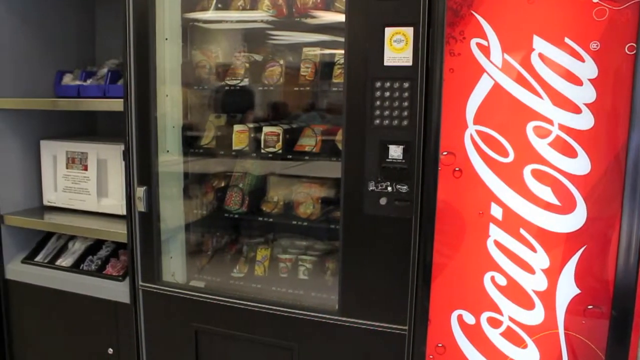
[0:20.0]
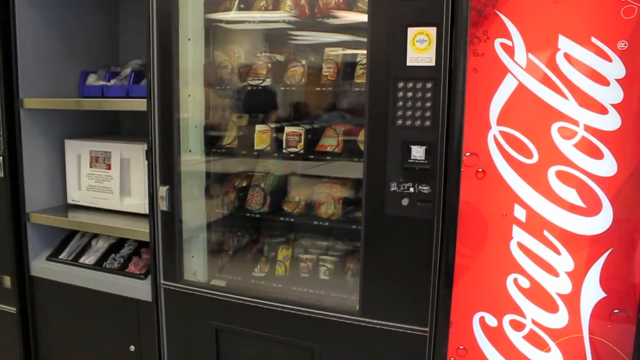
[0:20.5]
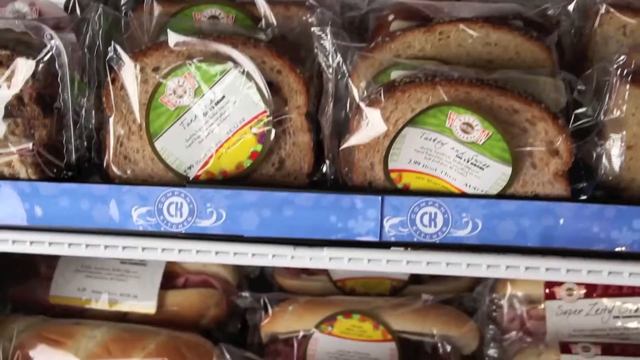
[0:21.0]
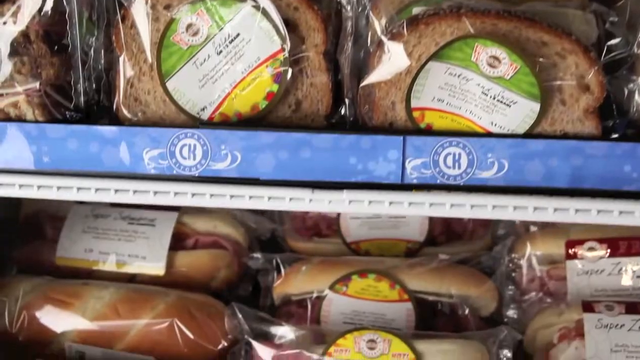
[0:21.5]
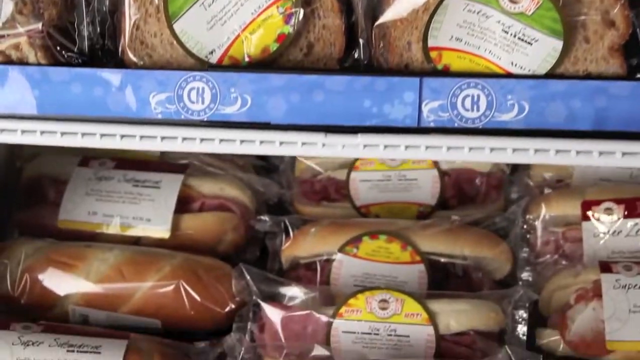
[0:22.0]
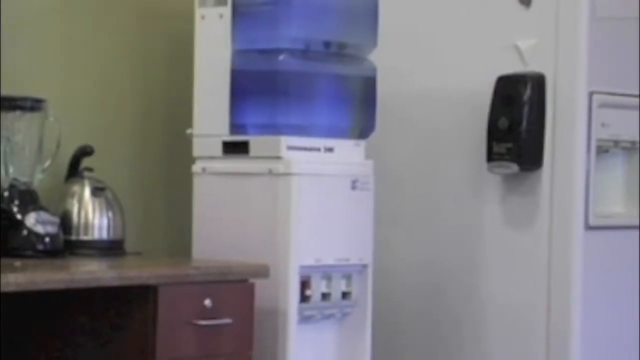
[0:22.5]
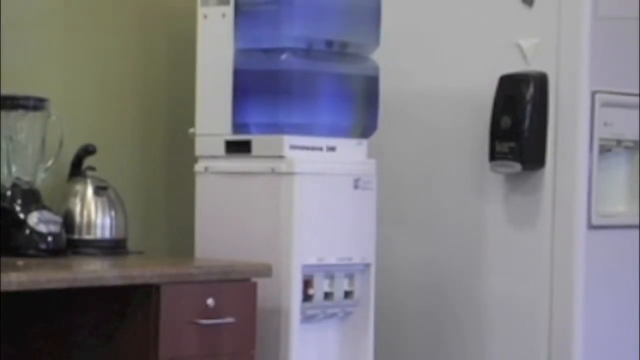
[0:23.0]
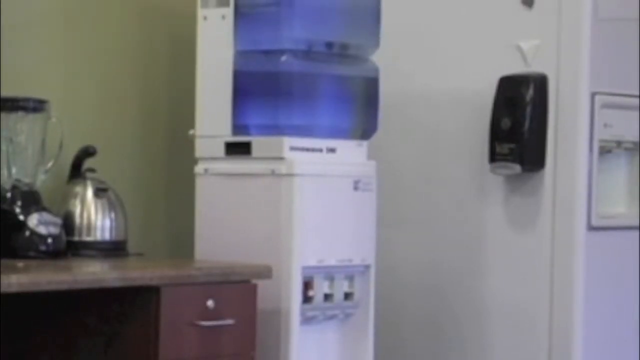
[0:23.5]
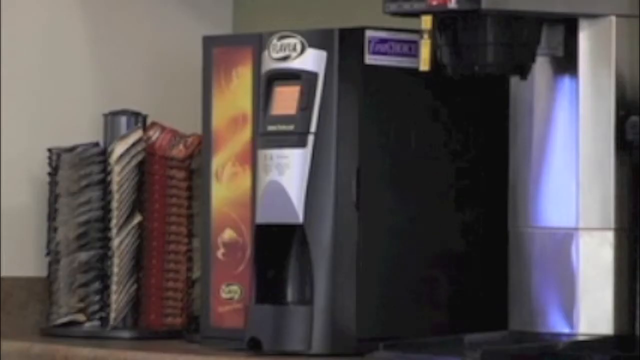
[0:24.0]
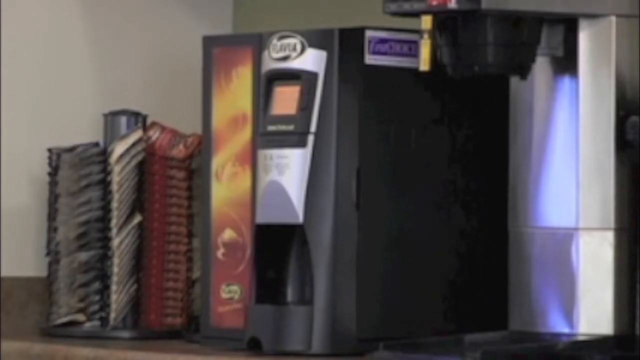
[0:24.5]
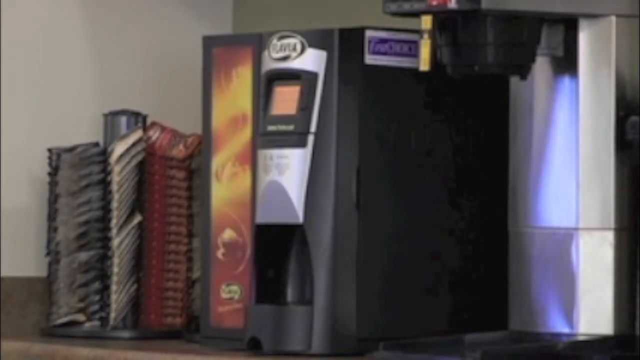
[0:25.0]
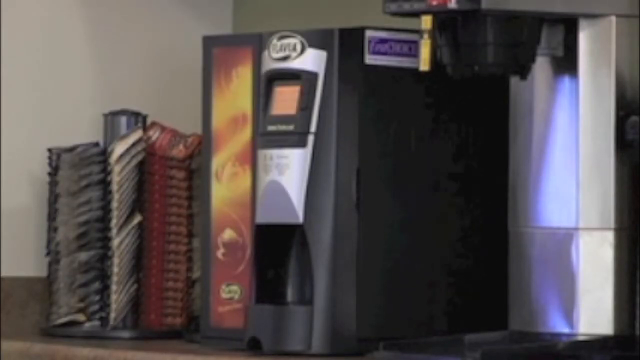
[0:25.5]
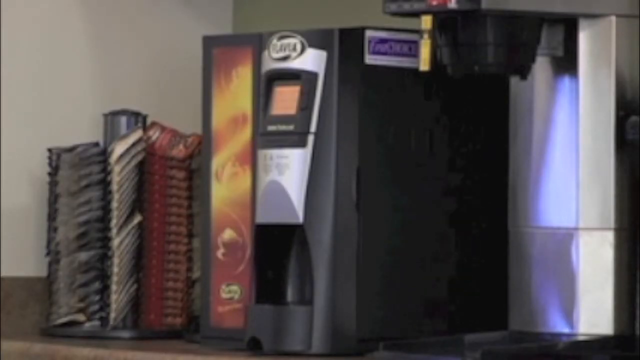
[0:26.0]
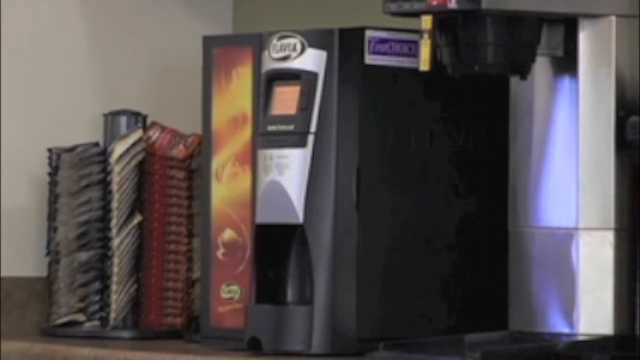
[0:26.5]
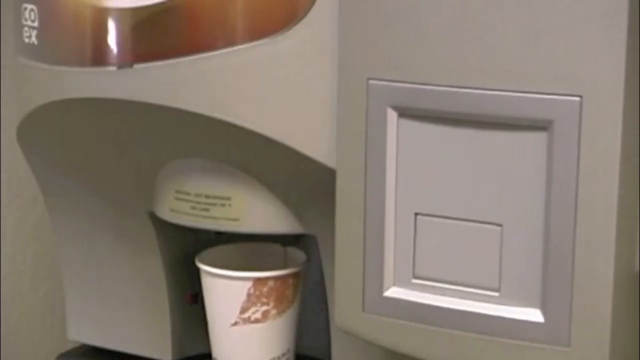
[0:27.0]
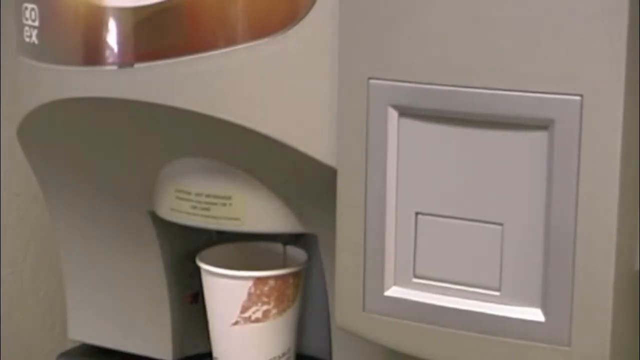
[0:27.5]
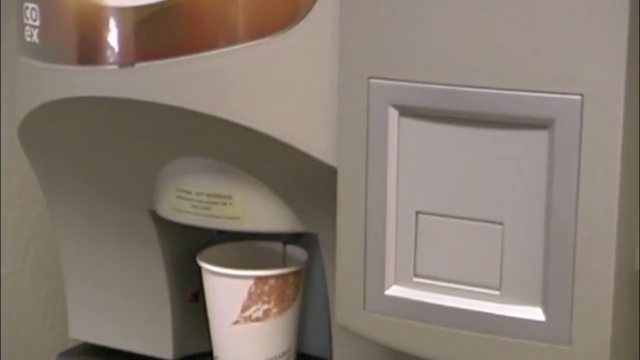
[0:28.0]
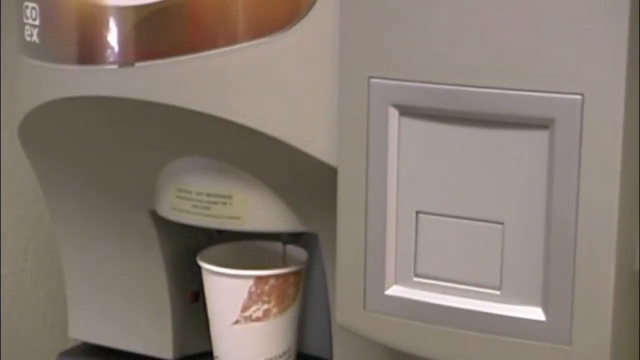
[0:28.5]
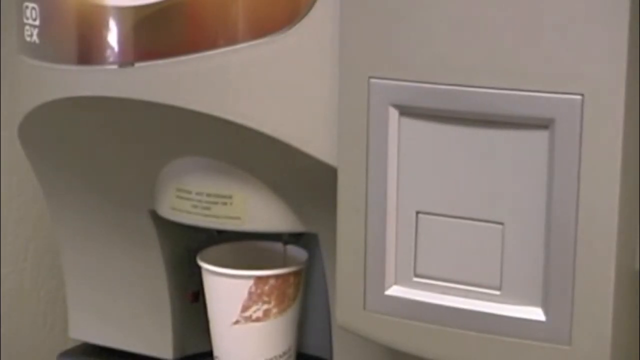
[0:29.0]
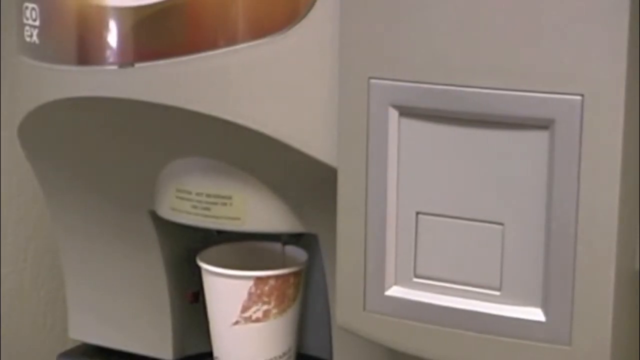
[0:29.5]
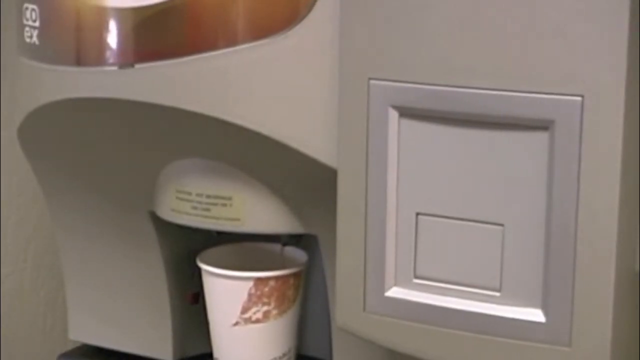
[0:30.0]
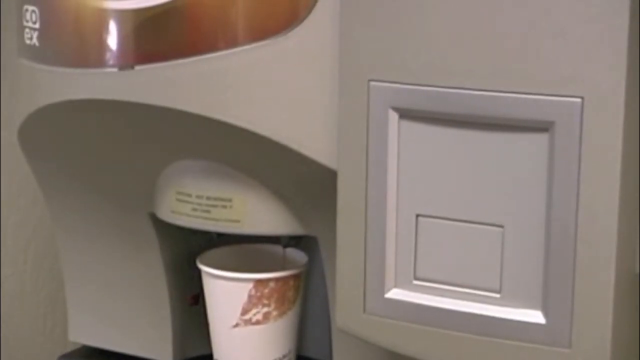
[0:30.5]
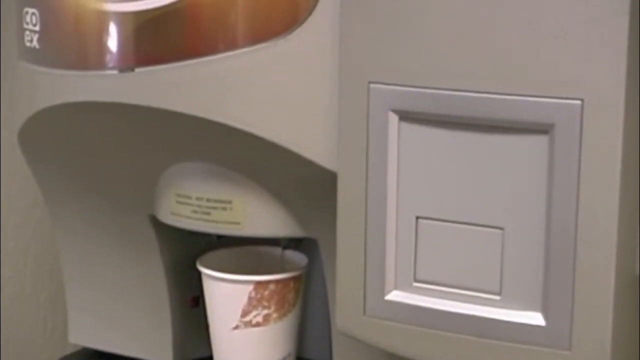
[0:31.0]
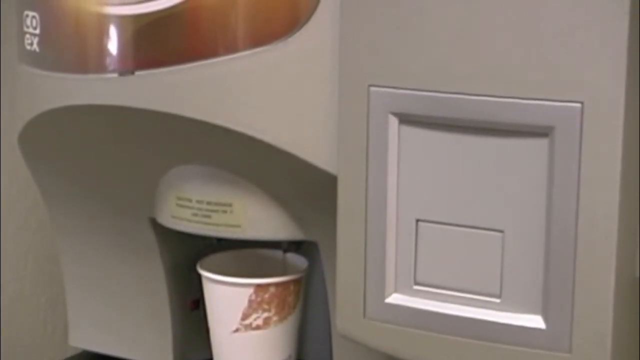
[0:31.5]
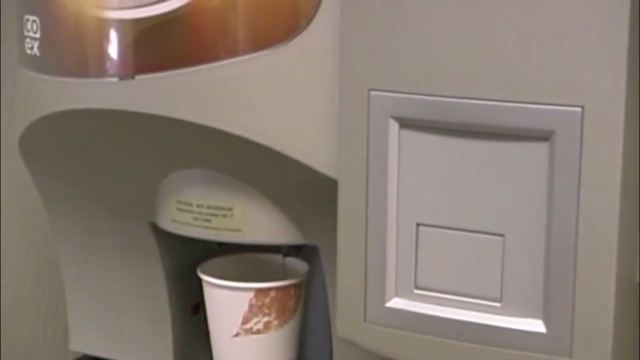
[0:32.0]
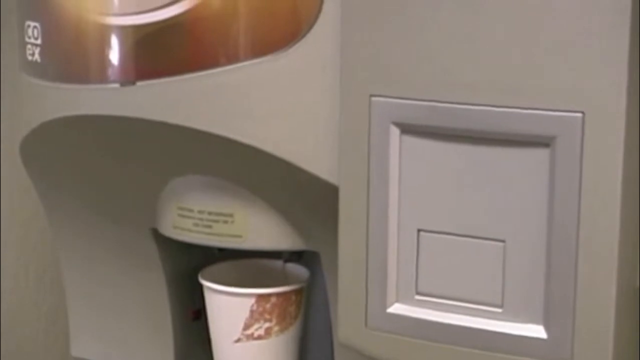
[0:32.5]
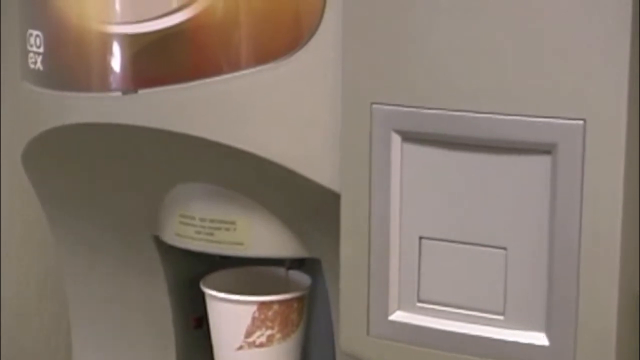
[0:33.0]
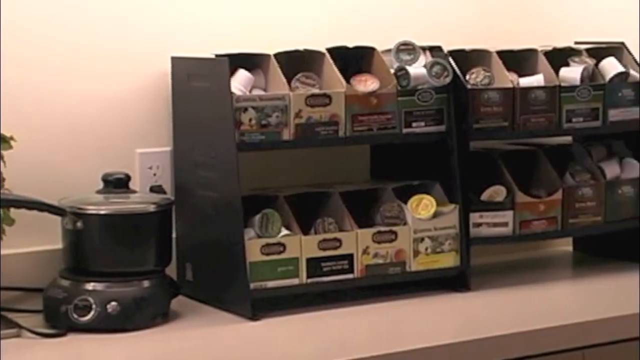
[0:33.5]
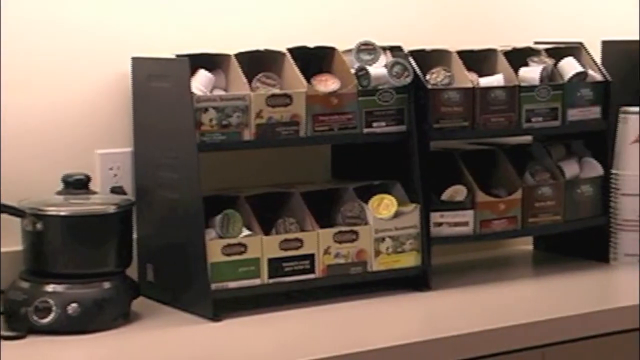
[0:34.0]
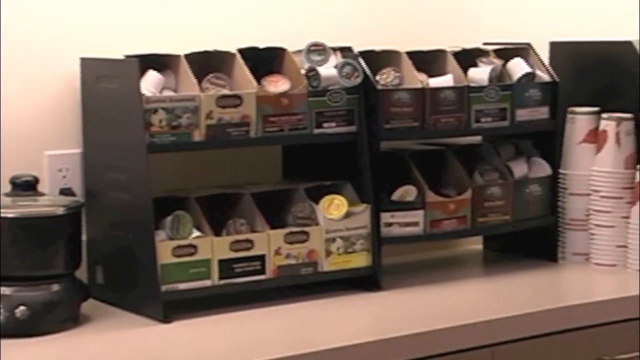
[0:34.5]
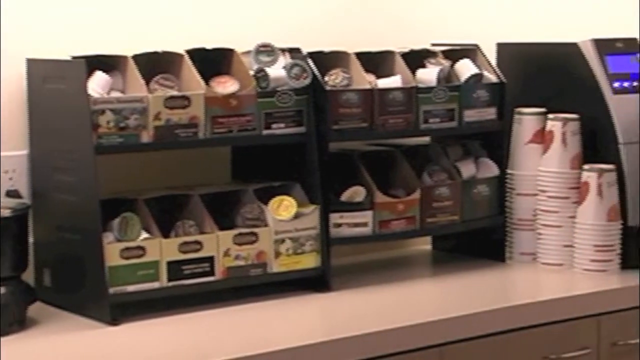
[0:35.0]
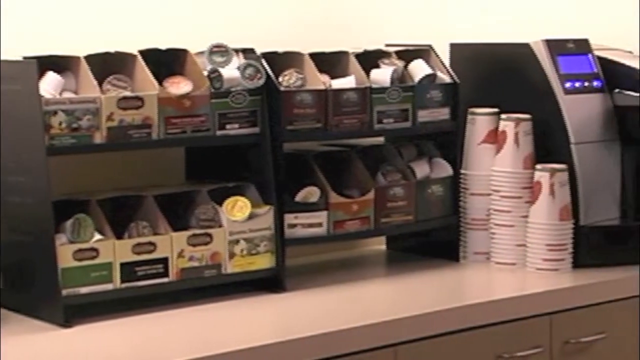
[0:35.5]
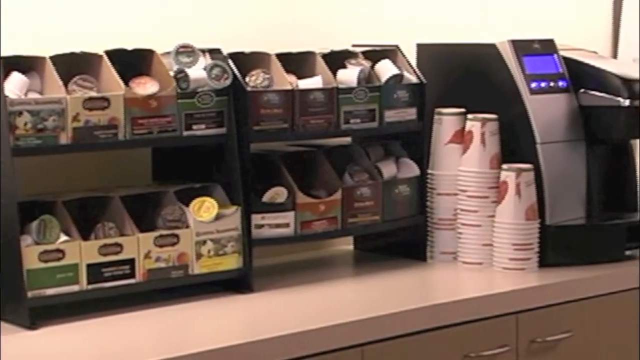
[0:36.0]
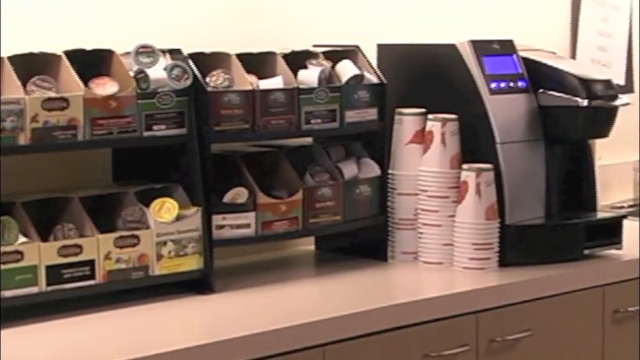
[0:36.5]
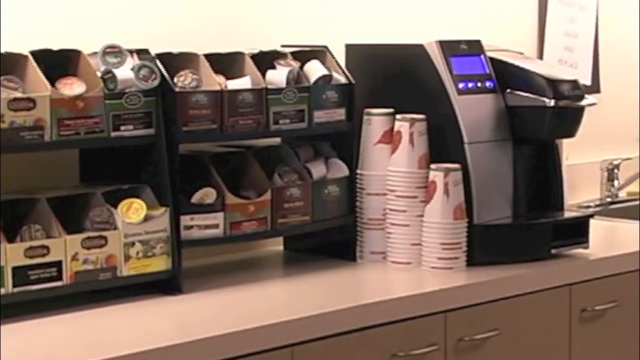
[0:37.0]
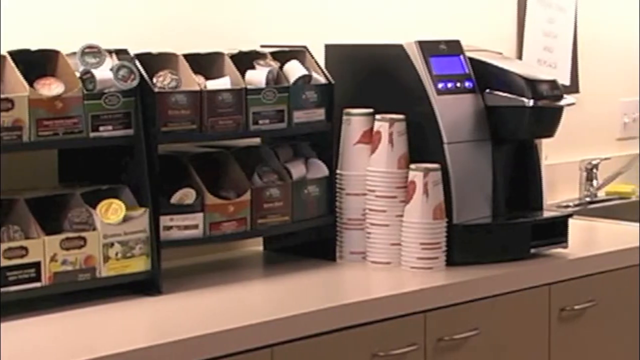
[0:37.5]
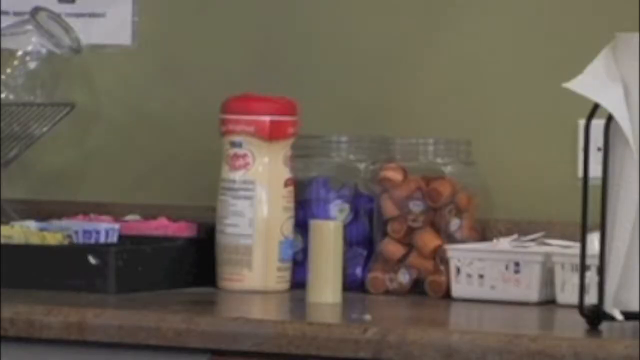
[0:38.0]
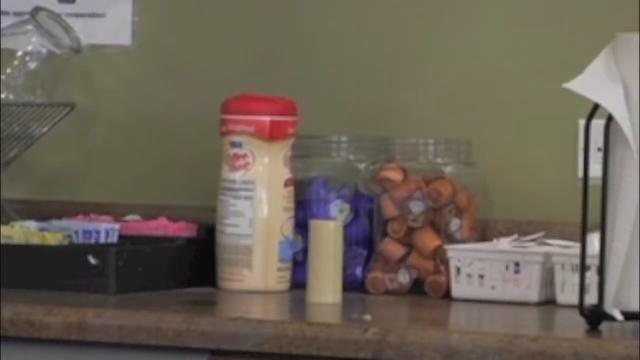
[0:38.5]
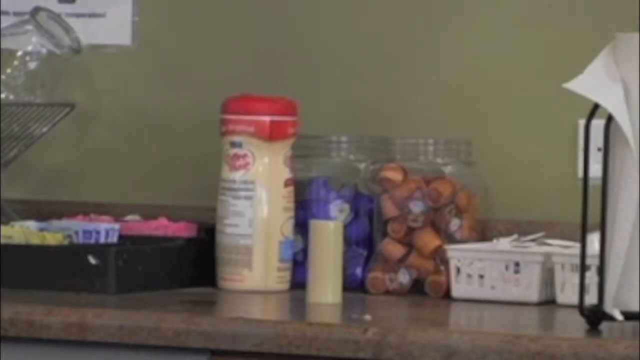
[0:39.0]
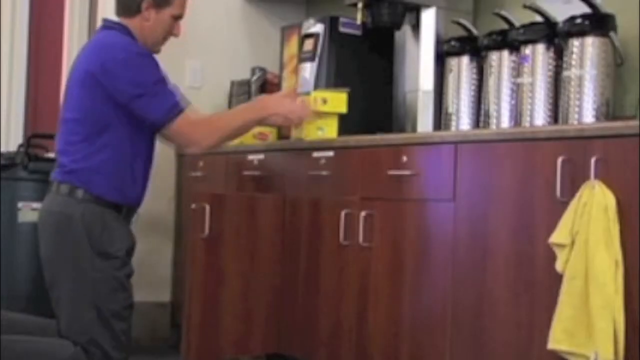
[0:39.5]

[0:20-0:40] The vending machines appear first, followed by wrapped sandwiches for sale. Then different products available from the vending machines are shown. There is a water tank and dispenser for getting water. Coffee machines appear, followed by a close-up of coffee pouring into a white and brown cup. A view shows what appear to be coffee capsules, apparently for different flavors and types of coffee from the machines. Another type of coffee capsules is shown, and a man is restocking and organizing the shelves in the vending machine department.